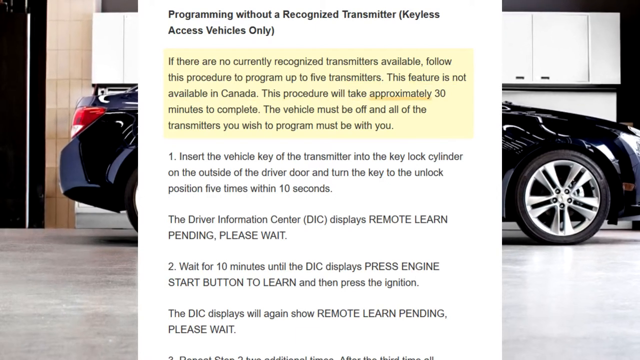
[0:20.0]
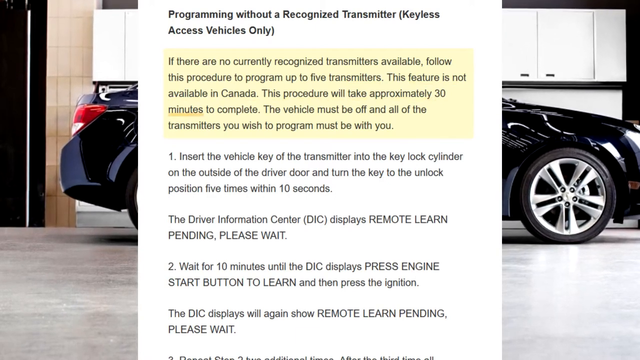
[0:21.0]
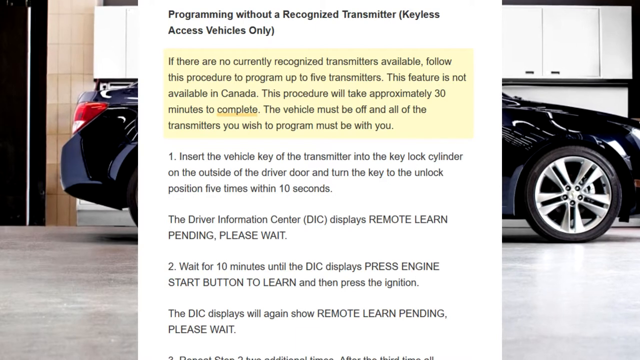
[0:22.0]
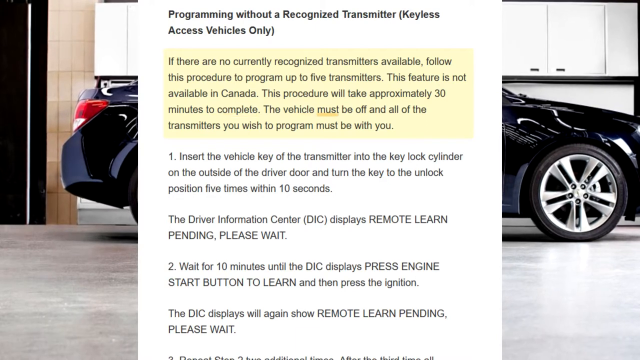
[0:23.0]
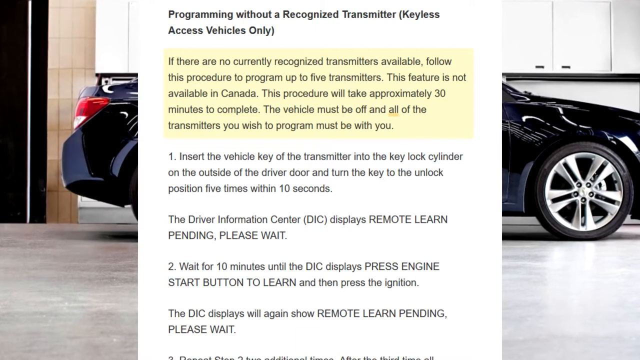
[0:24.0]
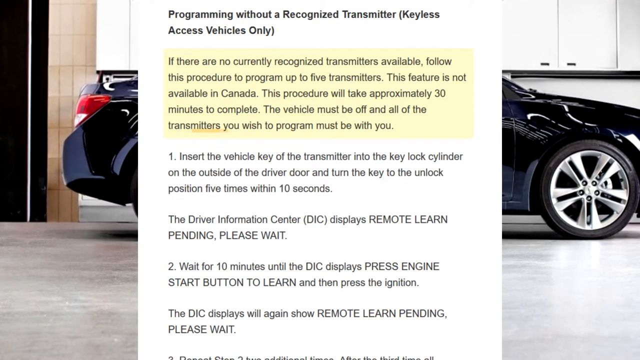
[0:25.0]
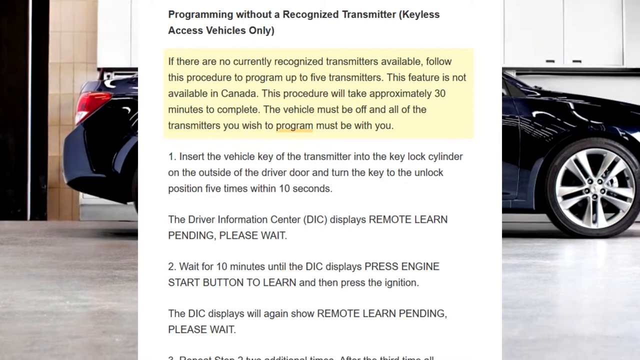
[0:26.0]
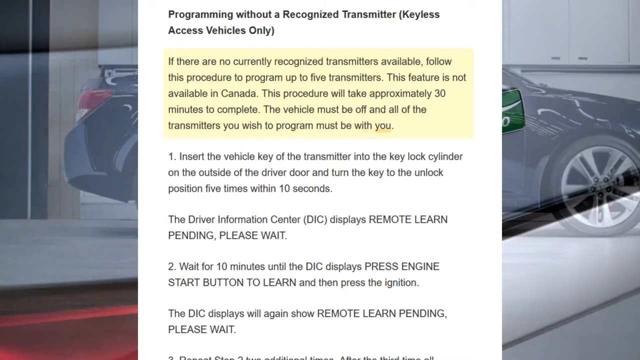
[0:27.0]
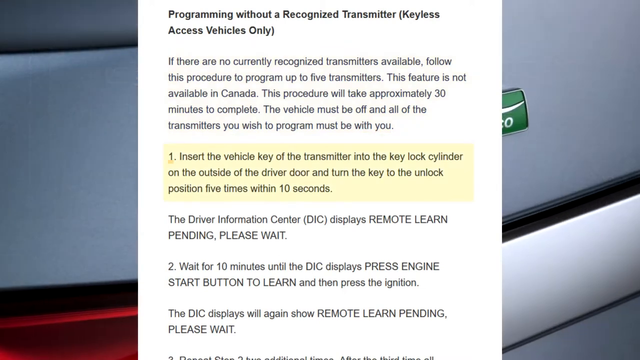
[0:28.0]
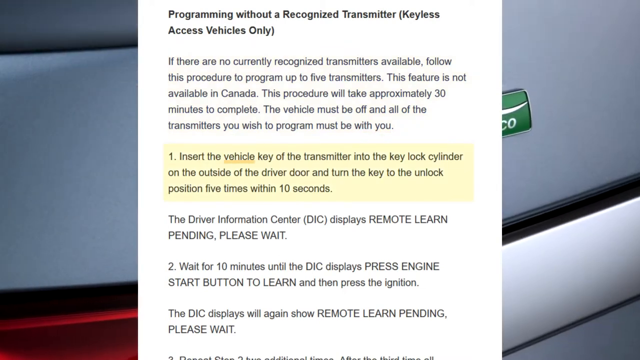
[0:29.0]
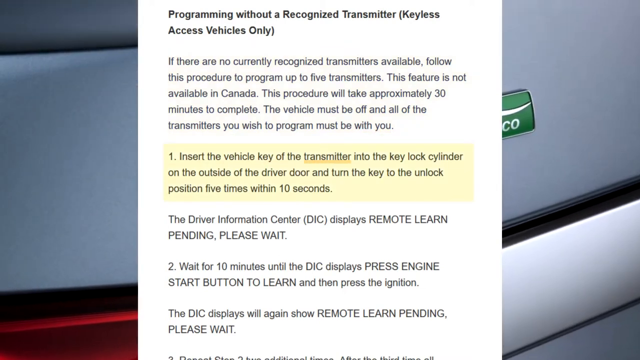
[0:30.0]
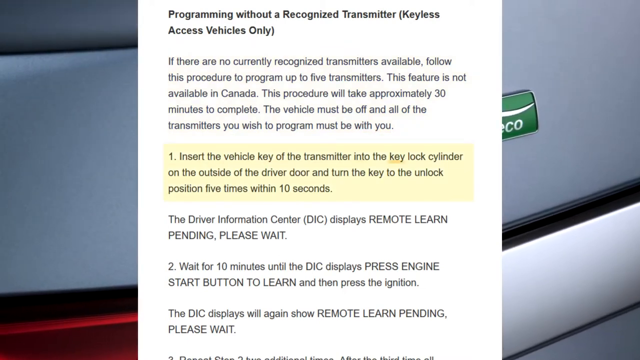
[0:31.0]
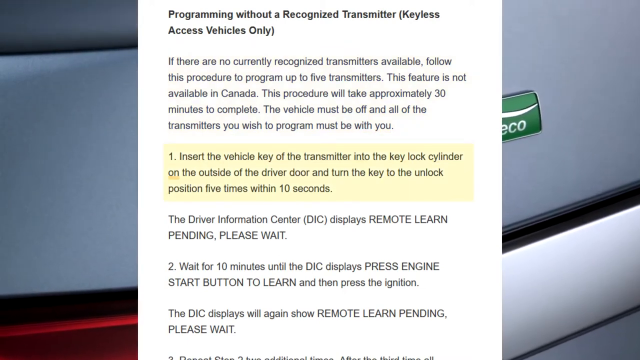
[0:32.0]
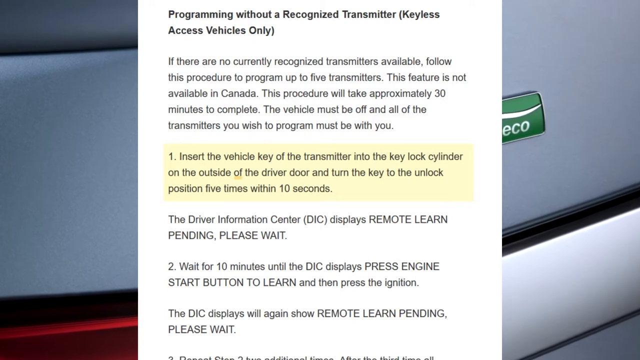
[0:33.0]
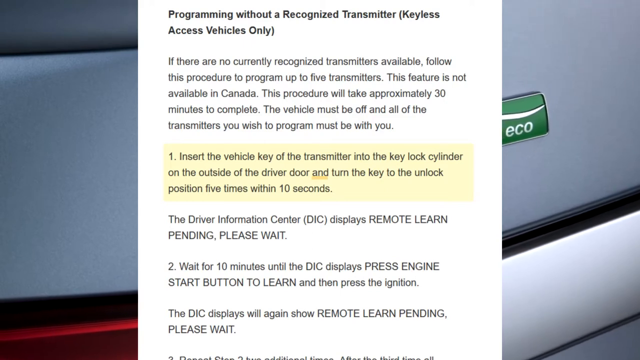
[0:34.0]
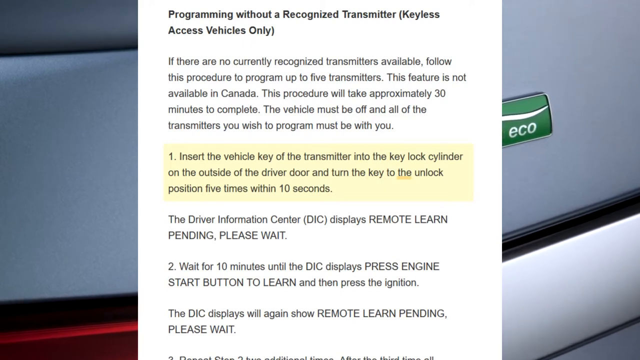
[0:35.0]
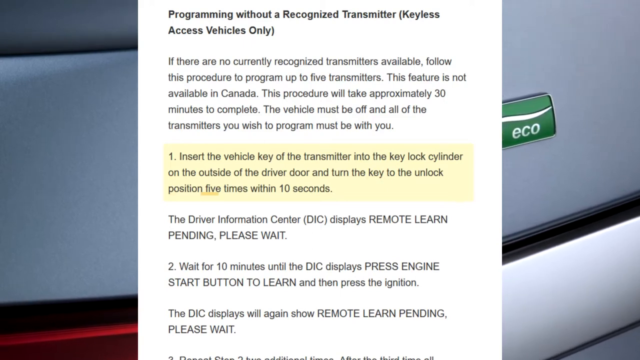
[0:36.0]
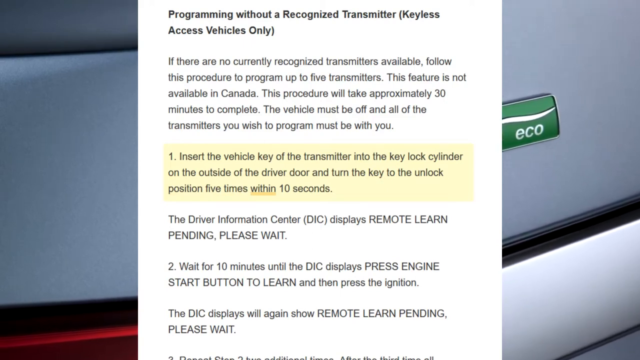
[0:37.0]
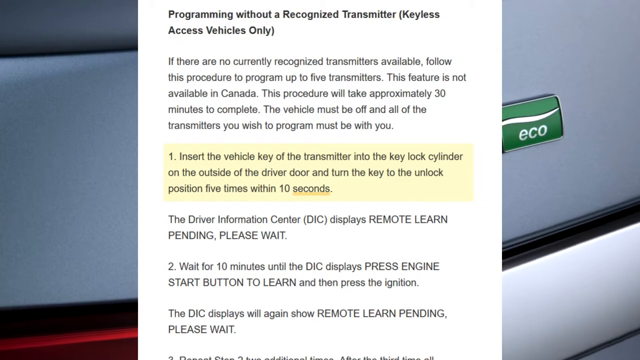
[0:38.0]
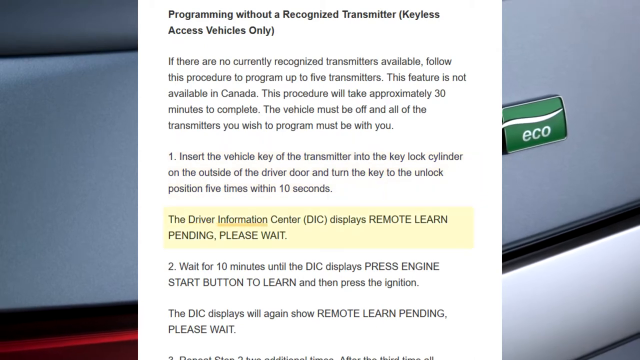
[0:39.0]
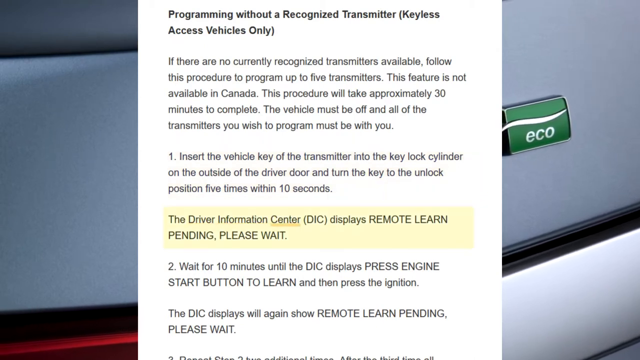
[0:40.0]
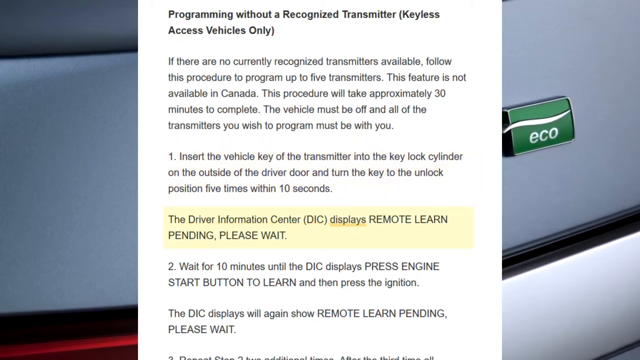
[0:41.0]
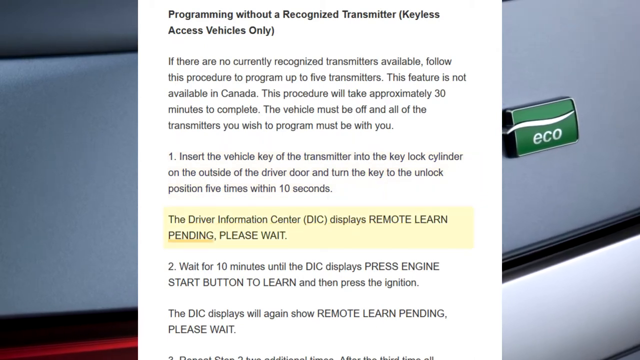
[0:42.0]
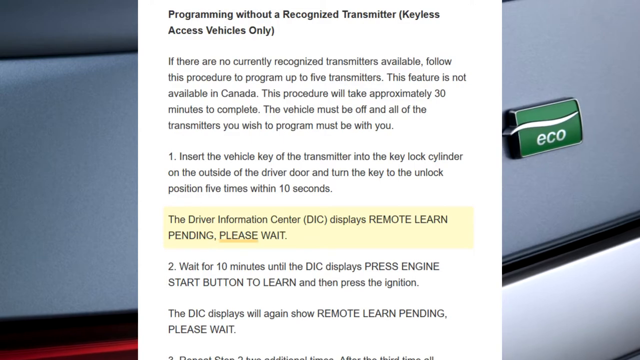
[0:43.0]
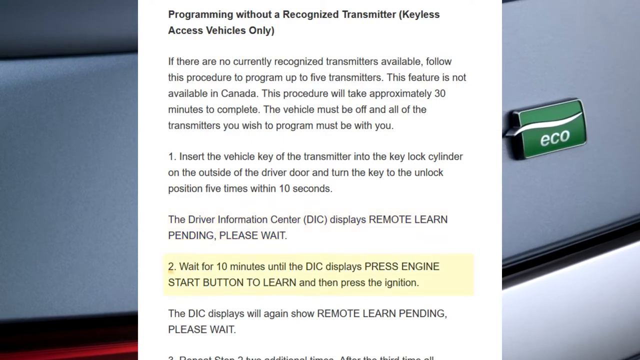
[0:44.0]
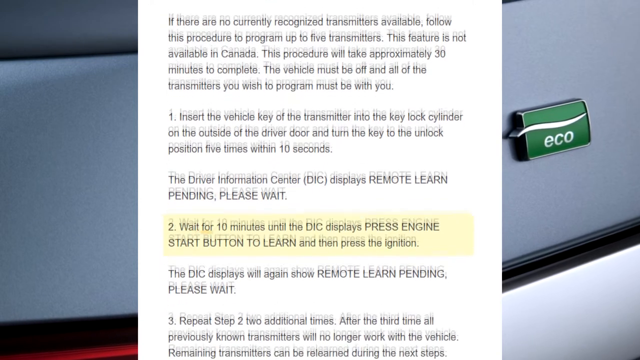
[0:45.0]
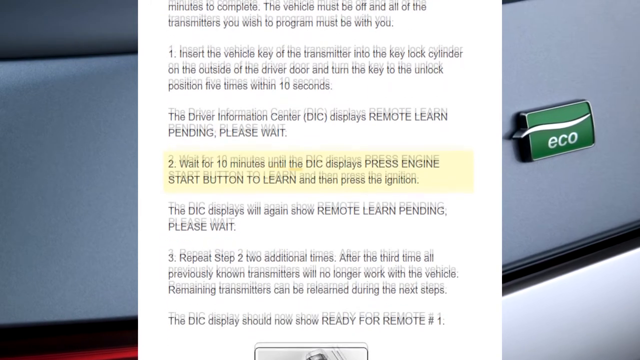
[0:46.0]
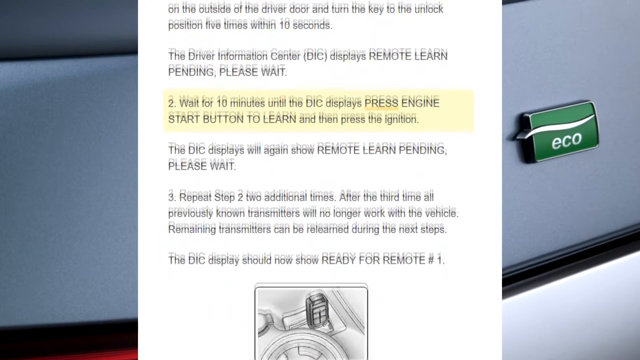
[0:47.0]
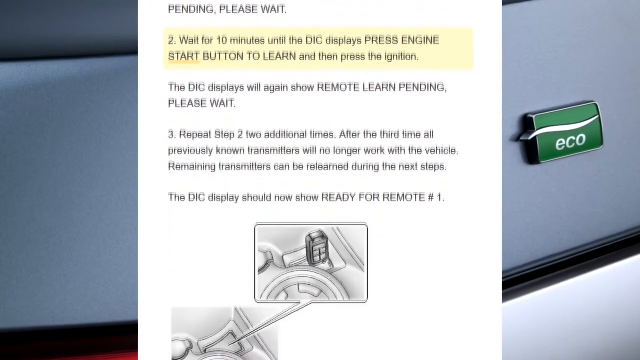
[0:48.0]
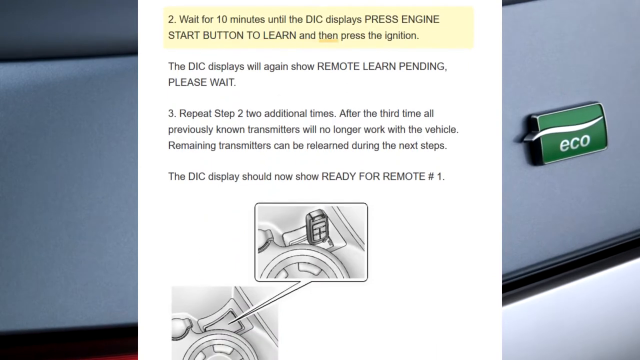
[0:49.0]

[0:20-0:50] The first paragraph remains highlighted in a sort of off-yellow color, with the words being underlined one after another. The camera keeps slowly panning to the left, so all of the front tire is visible and none of the back tire. The car is on concrete, a white wall runs from the right over to the left, and a little concrete and a black border show down the left side as the camera keeps slowly zooming in. The scene then fades to a close-up of what looks like the trunk of a car, with a taillight in the bottom right corner and part of a car logo, green with gray lettering, coming off the right side; the back of this car is gray. The second paragraph, which begins with a one, is now highlighted. As the camera slowly pans left, a green square on the back of the car becomes visible, with a silver line across it and, underneath in silver, "echo." The third paragraph is then highlighted and its words underlined, and it moves on to the next one, numbered two. The page scrolls down, showing three paragraphs in one line and then small images for a car: the first has a tire across the bottom, others appear to show a cell phone and a dashboard, and a little arrow points down to the left where the beginning of another one comes in.